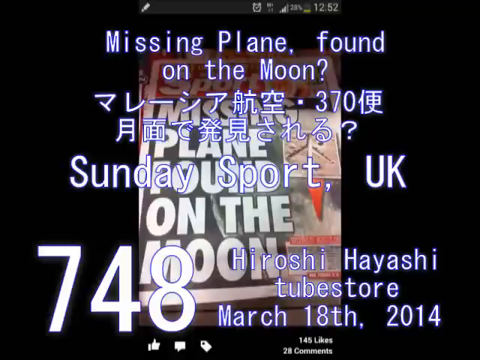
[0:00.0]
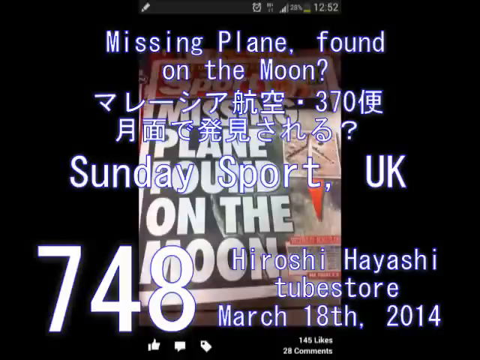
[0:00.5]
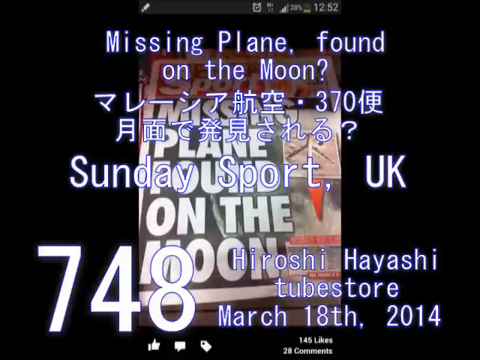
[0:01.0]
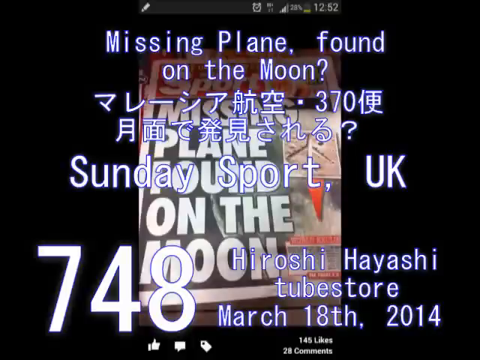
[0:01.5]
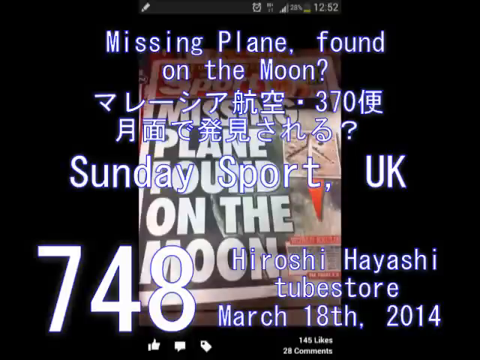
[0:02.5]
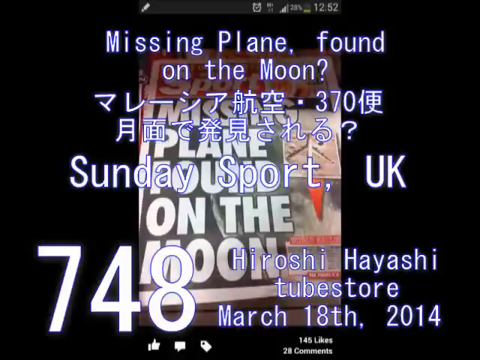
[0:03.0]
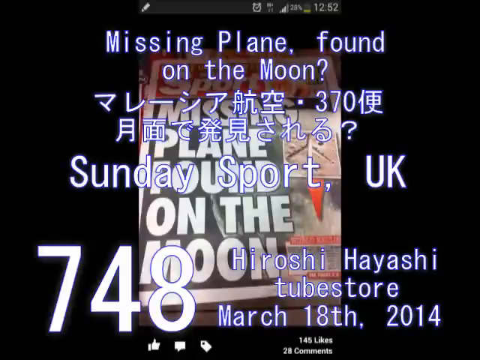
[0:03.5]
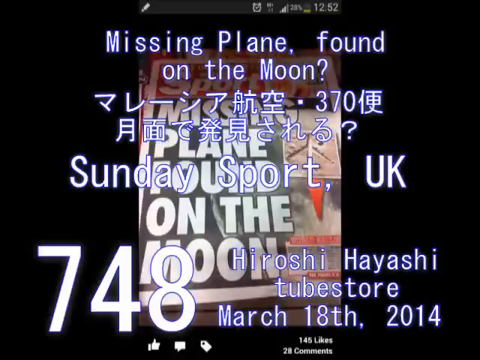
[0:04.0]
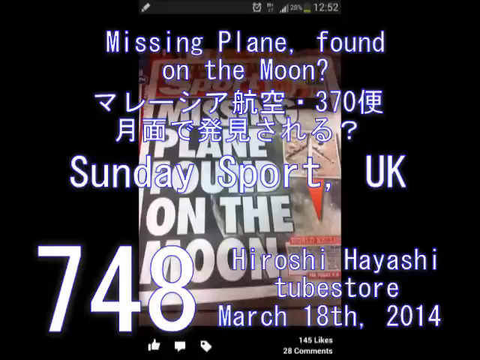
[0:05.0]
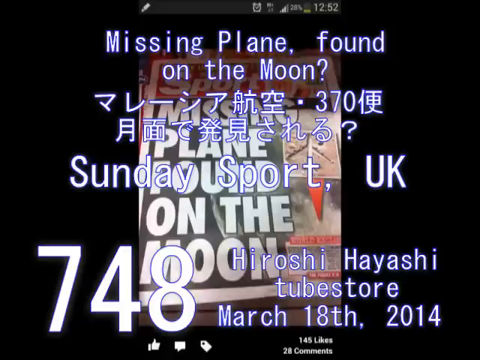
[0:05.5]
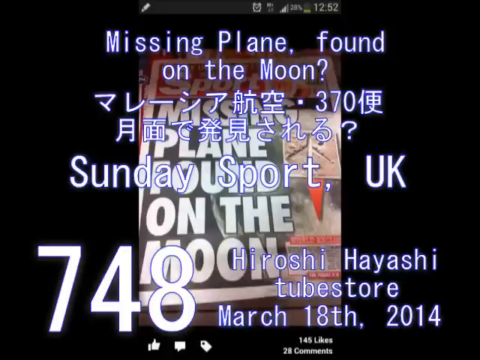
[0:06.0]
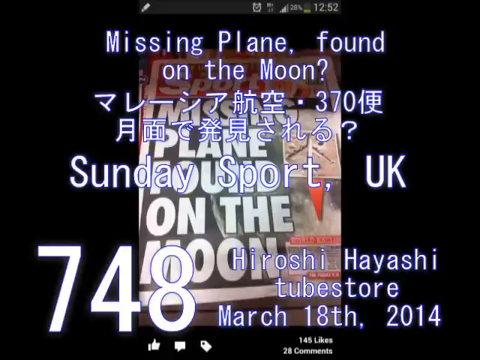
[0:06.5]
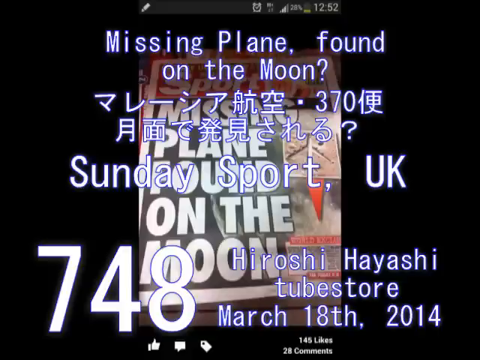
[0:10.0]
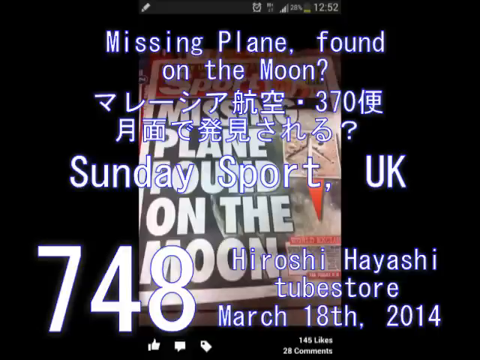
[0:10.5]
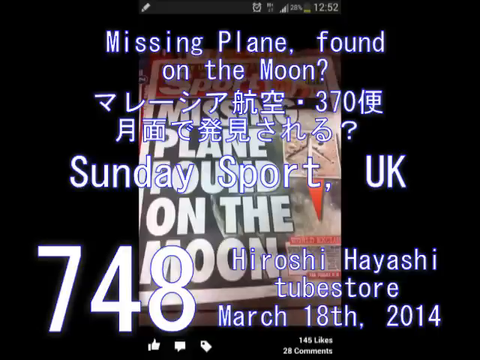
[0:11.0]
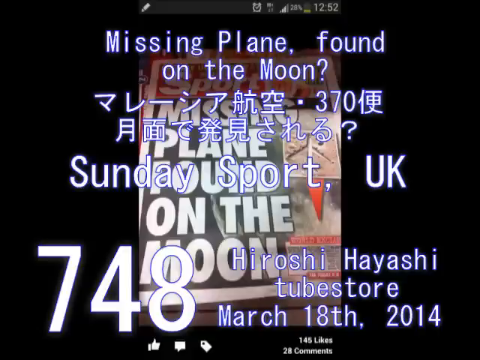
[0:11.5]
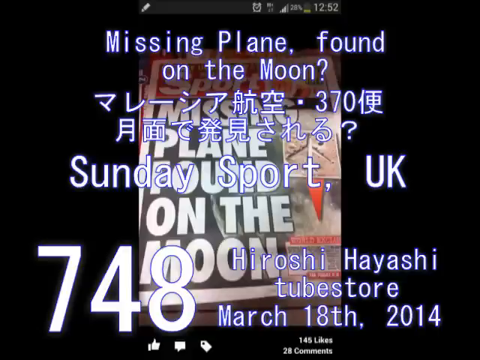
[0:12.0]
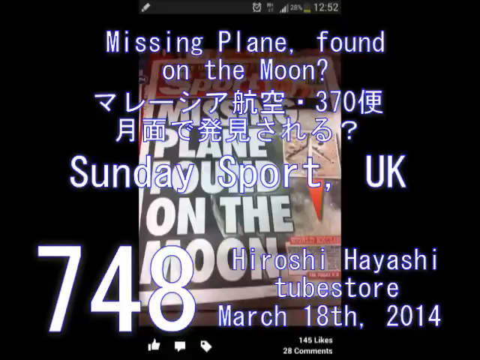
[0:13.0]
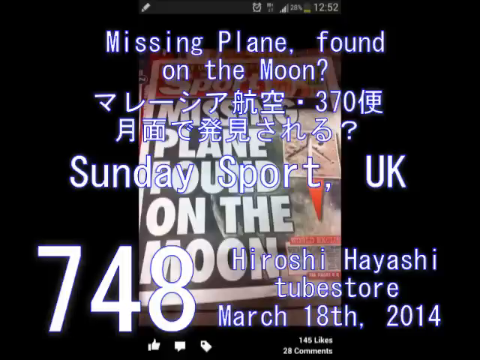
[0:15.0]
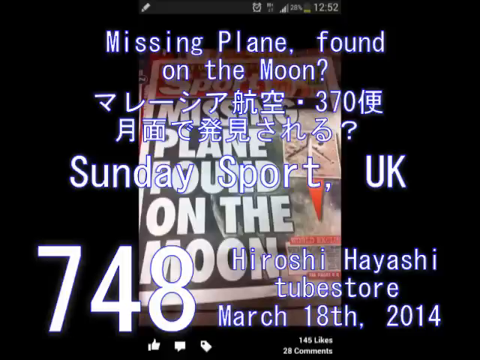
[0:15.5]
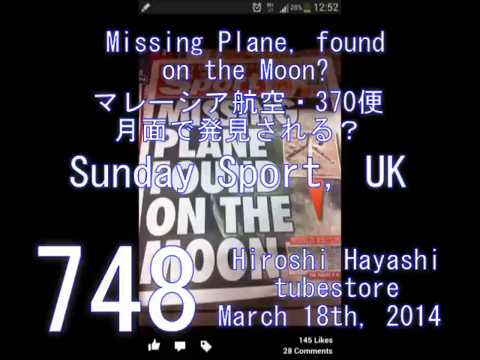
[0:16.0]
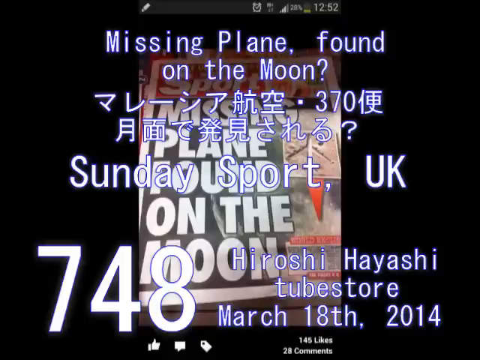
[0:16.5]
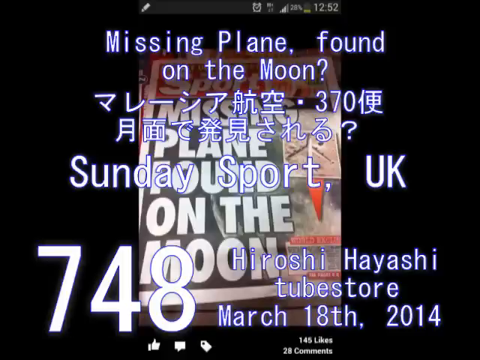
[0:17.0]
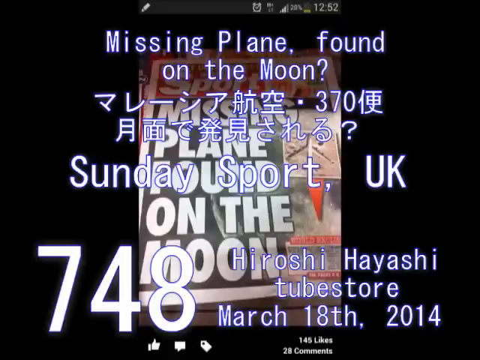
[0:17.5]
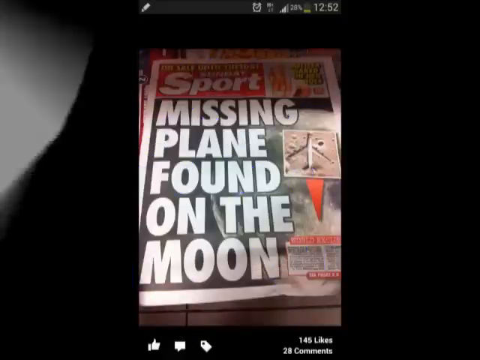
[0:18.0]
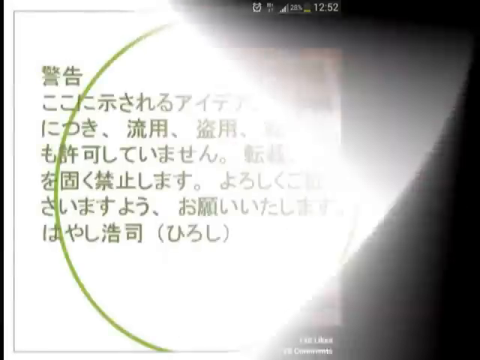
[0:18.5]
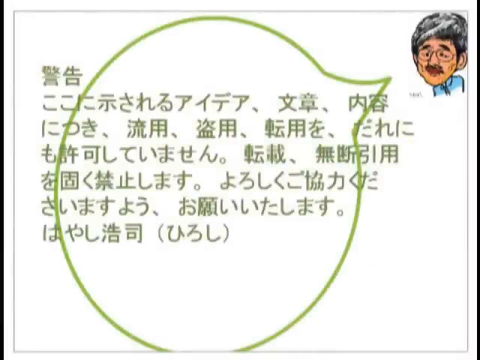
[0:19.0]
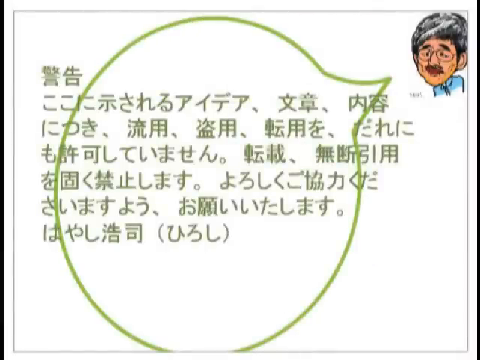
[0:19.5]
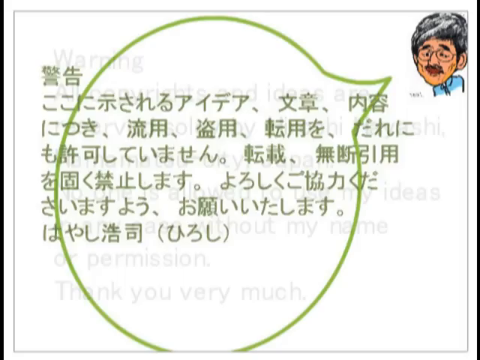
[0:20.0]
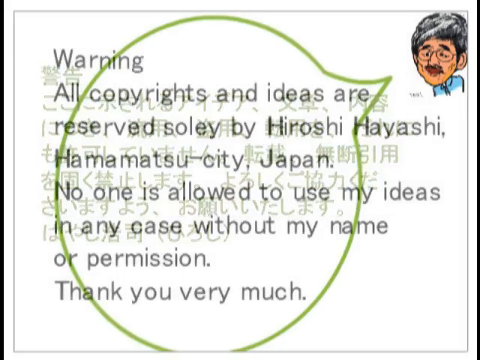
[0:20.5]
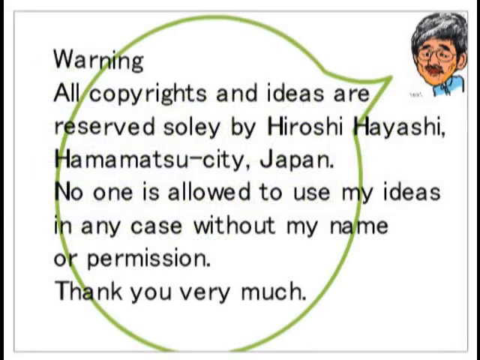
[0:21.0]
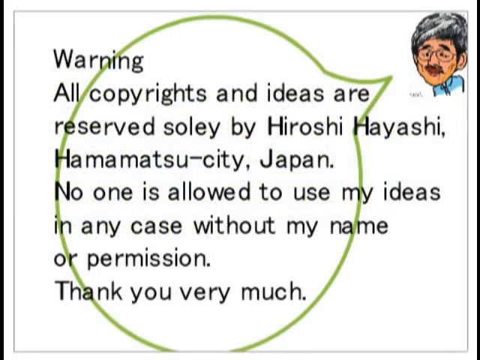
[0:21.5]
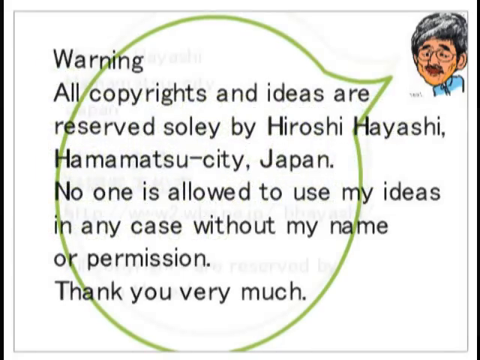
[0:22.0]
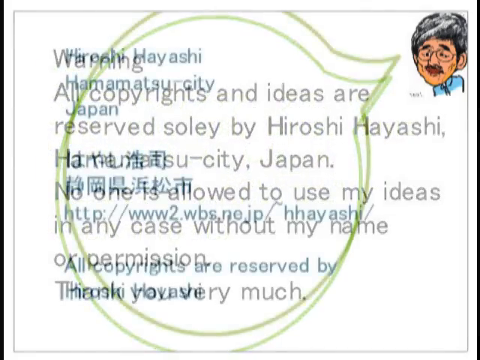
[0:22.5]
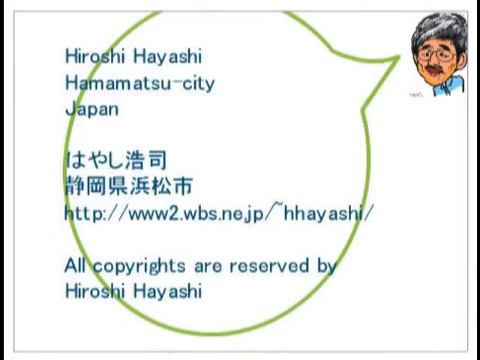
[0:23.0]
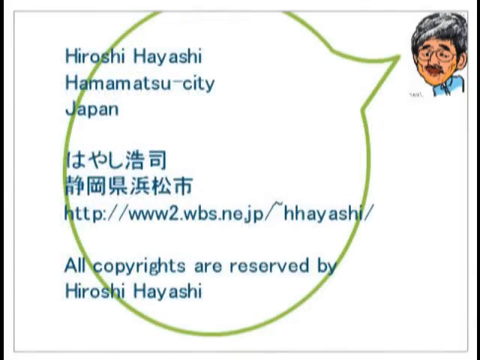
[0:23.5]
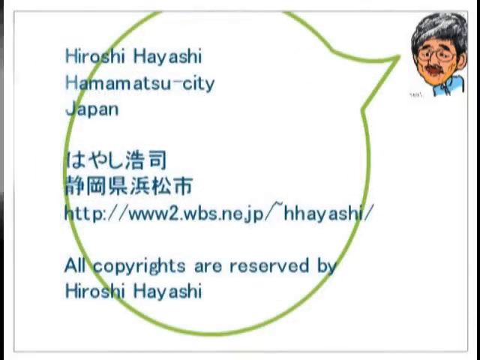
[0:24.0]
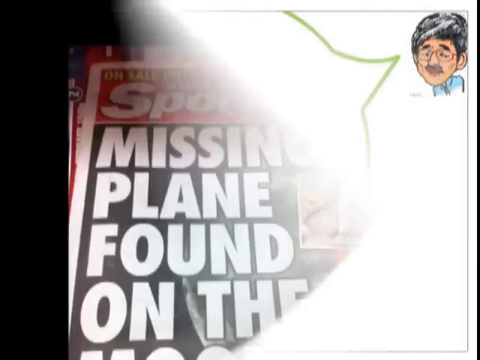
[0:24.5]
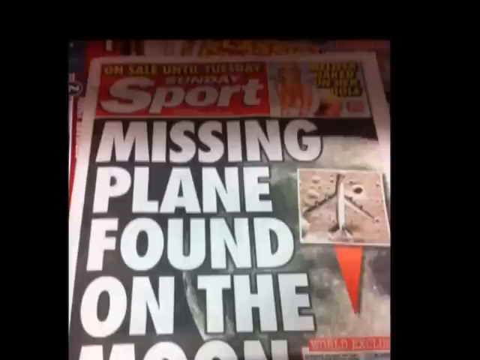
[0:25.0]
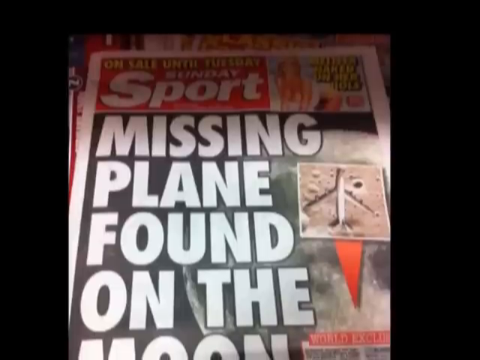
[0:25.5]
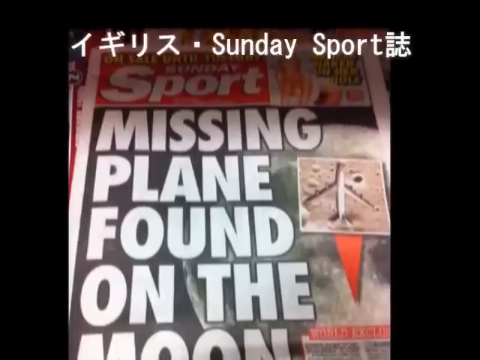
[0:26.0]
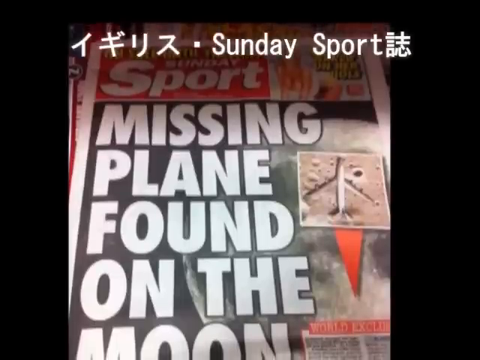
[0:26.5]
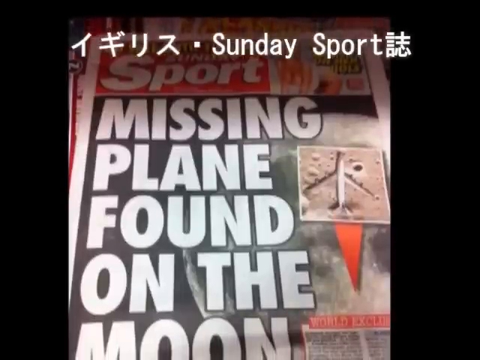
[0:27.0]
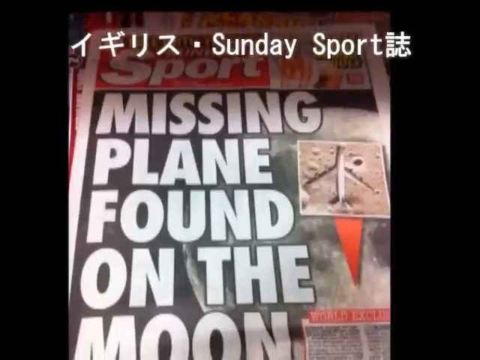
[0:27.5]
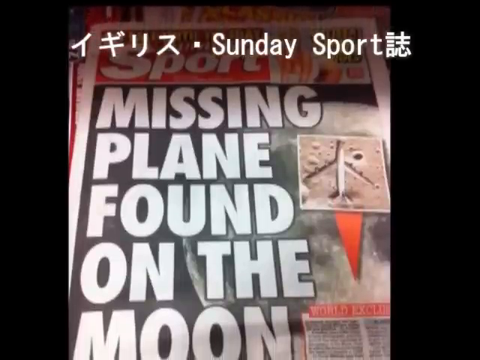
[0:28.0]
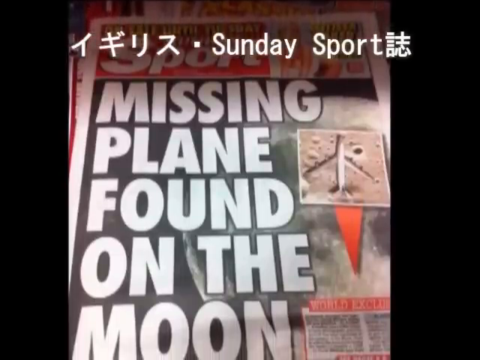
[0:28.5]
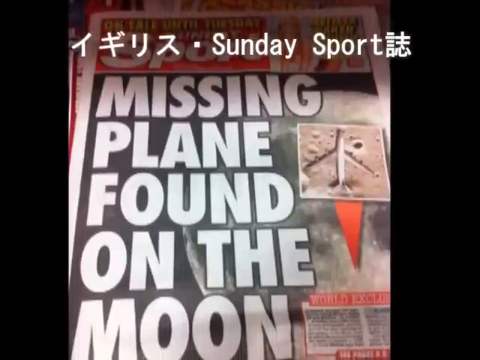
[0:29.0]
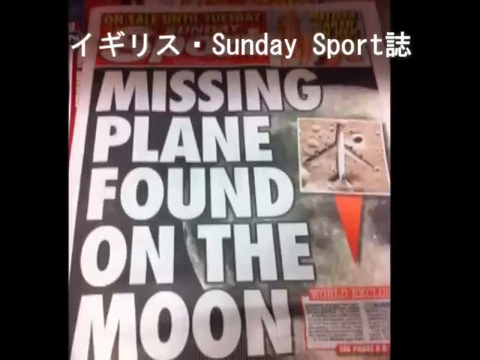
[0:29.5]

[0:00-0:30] A caption reads "missing plane found on the moon?" along with "Sunday sports," "UK 748," "Hiroshi Hayashi" and "March 18th 2014." What looks like an old sports newspaper is kind of in the background, with text reading "Playhouse on the moon." The story appears to be about something that has gone missing. The next screen shows Japanese characters and a large excerpt reading "warning All copyright and ideas are reserved solely by Hiroshi Hayashi Hama Matsu City, Japan. No one is allowed to use my ideas in any case without my name or permission Thank you very much." Text then shows "Hiroshi Hayashi" and "missing plane found on the moon," followed by "Sunday sports missing plane found on the moon."